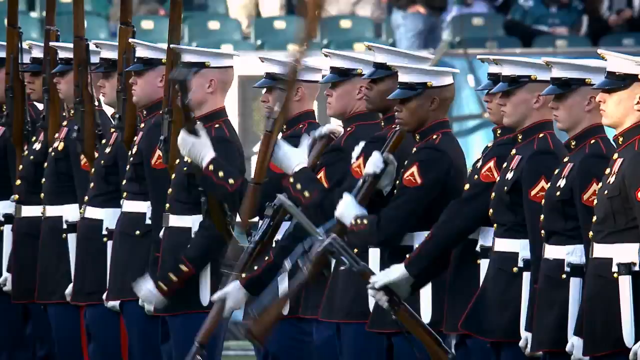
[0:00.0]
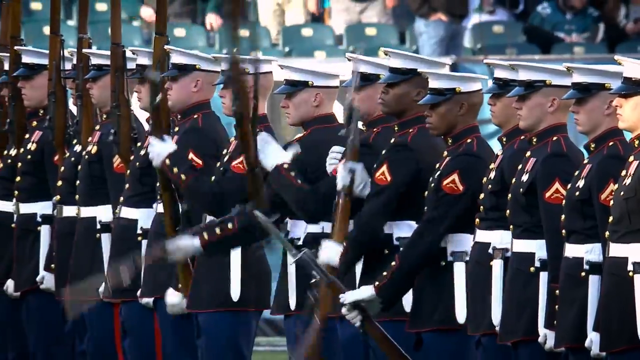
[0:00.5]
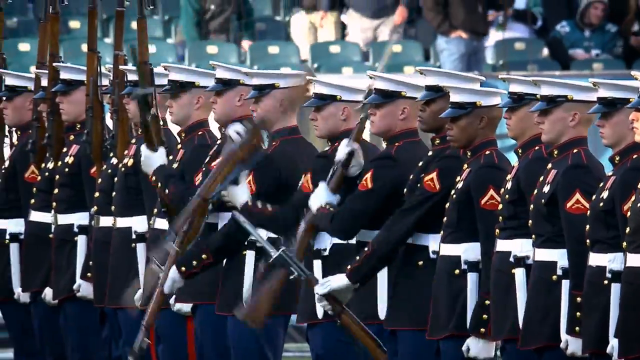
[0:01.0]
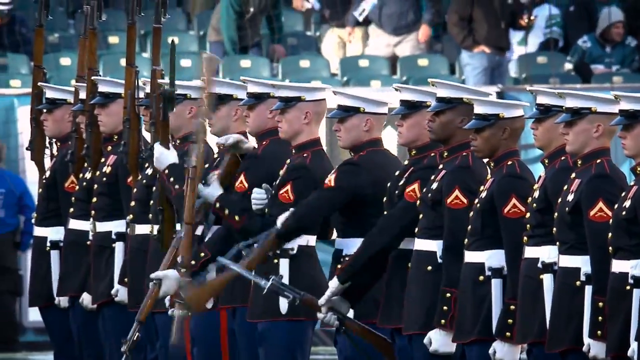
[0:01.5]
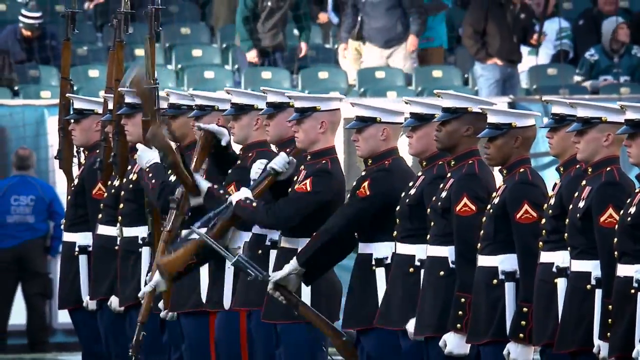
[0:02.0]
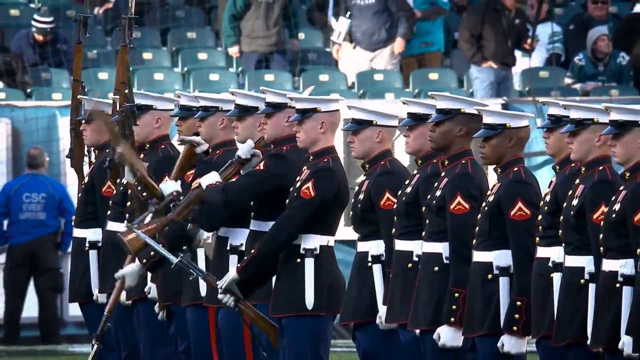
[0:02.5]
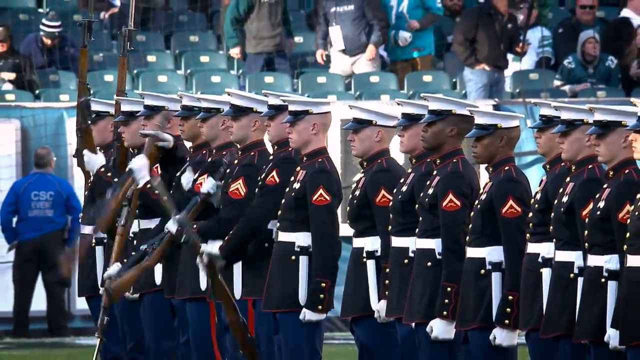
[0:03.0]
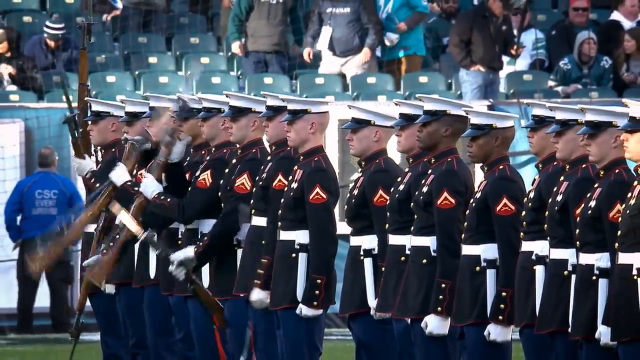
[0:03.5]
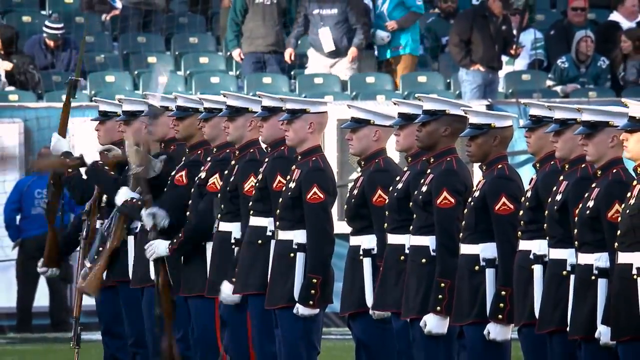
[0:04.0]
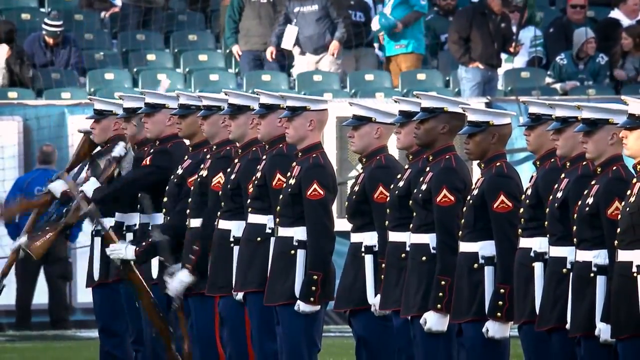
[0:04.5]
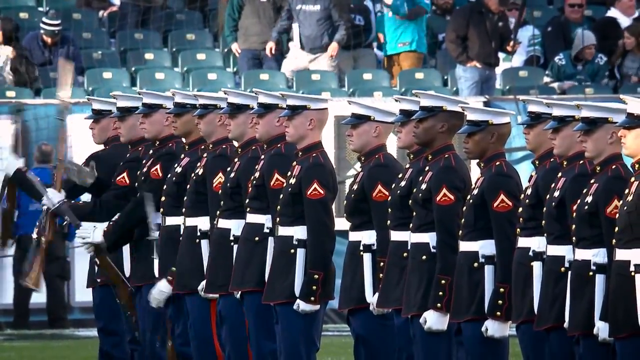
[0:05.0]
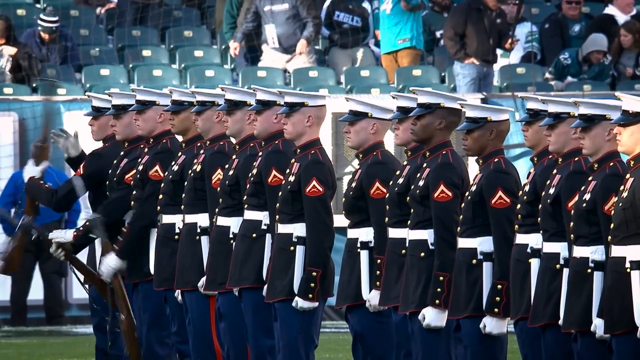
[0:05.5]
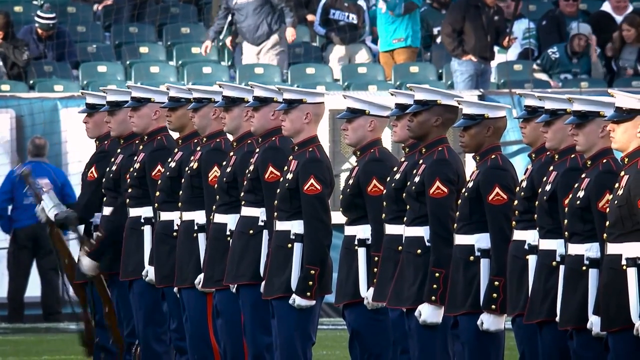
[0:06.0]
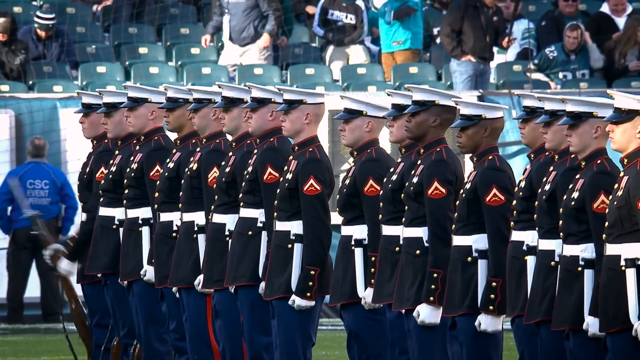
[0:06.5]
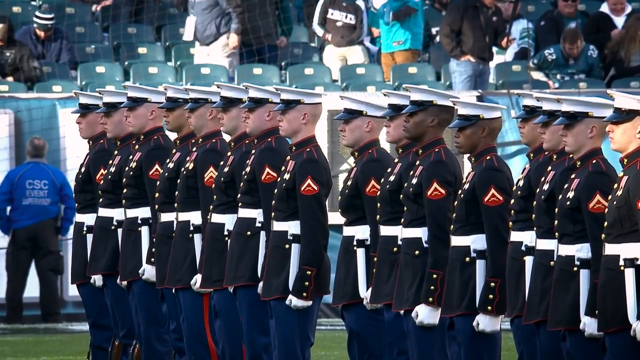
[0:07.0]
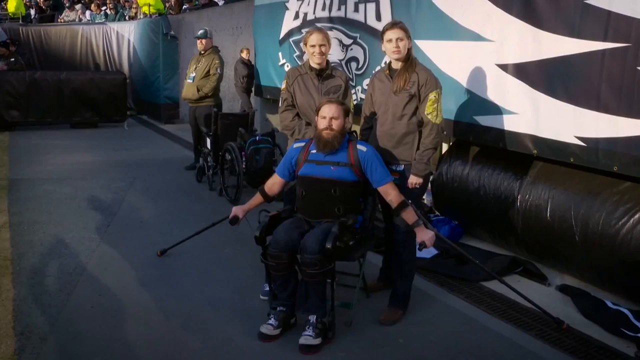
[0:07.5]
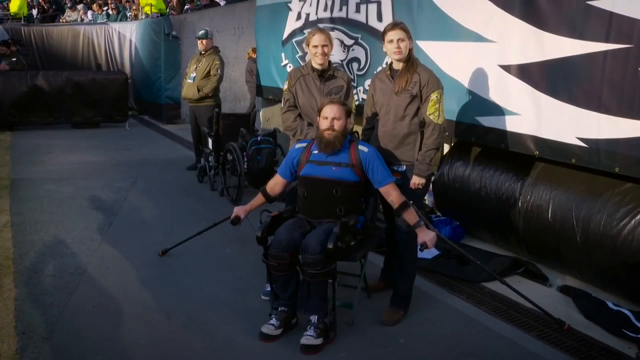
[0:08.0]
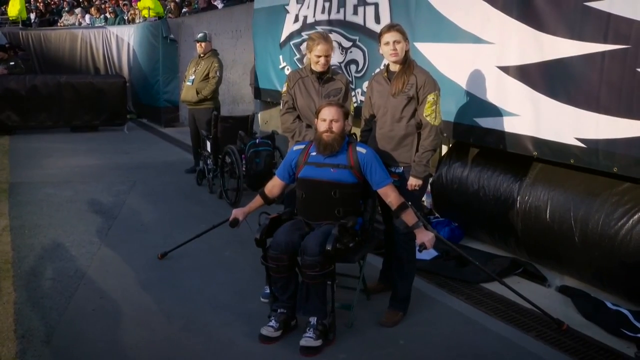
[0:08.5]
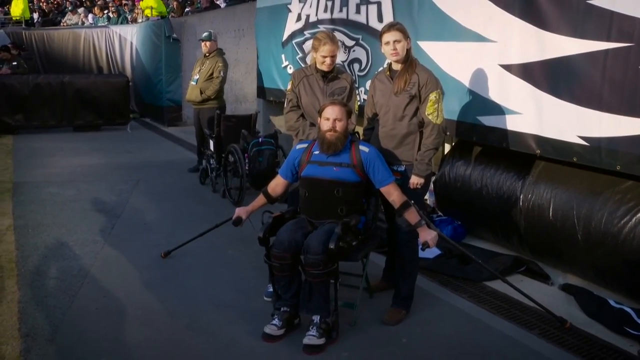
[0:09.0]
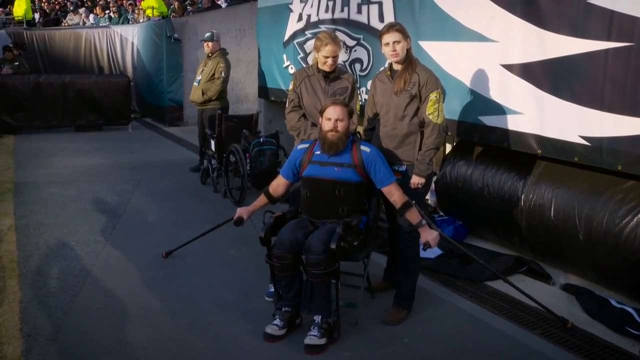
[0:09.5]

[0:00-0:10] The video opens on a line of marines wearing dark outfits with white belts and red accents. Some of the marines spin rifles in their hands, and once they catch a rifle, they lower it toward their side. As the camera fades back, a sparsely populated crowd is walking to their seats. The scene then changes to a man in a blue shirt and dark jeans sitting in a wheelchair, holding a cane in each hand. Two women wearing brown jackets with yellow accents are standing behind him.